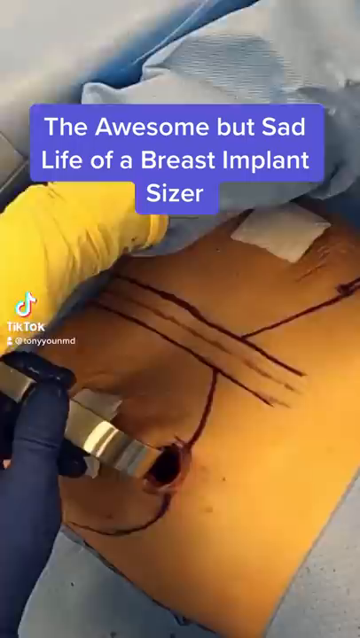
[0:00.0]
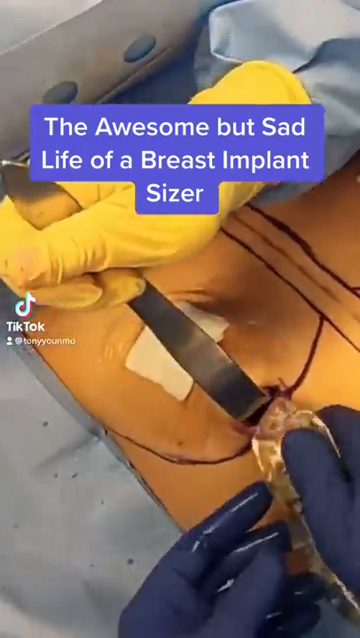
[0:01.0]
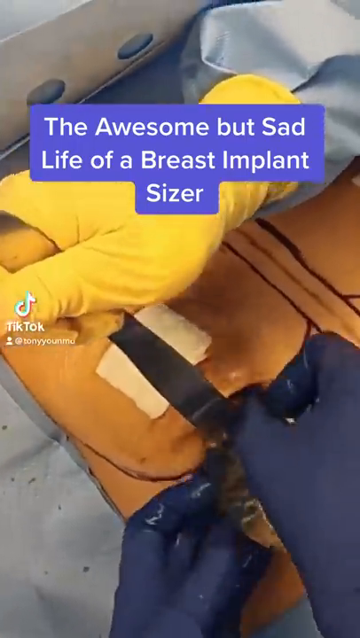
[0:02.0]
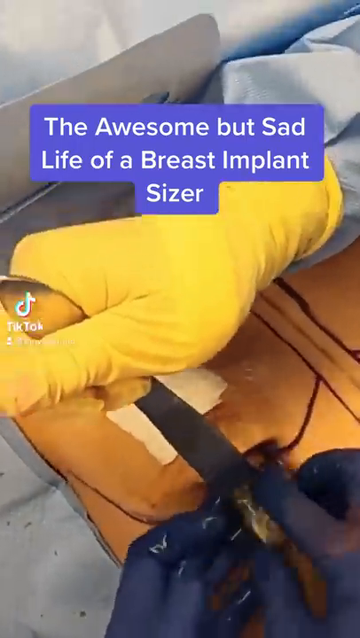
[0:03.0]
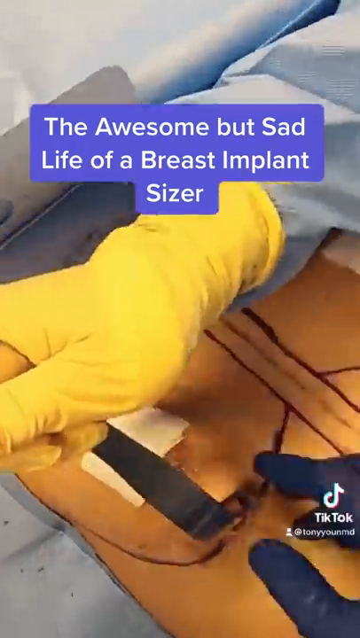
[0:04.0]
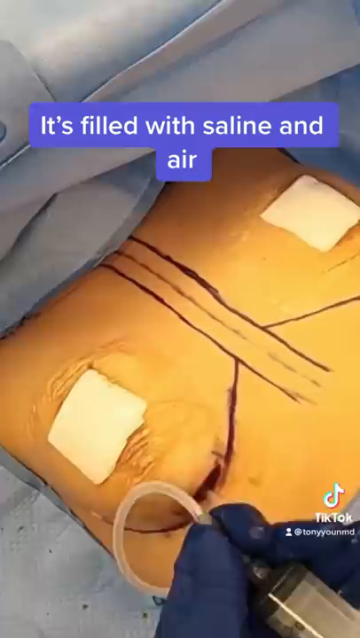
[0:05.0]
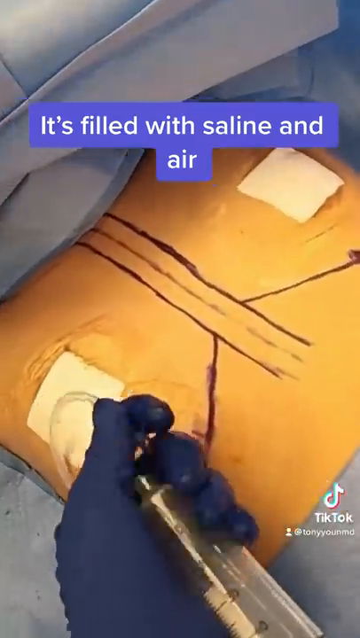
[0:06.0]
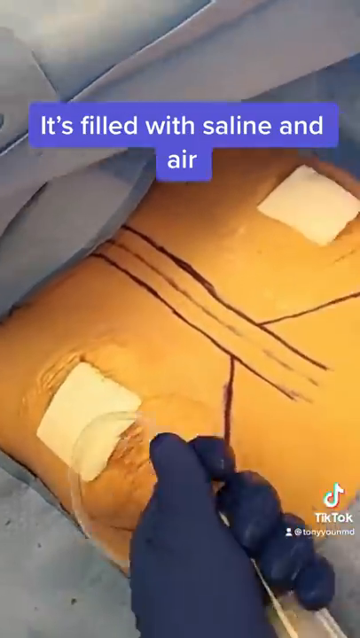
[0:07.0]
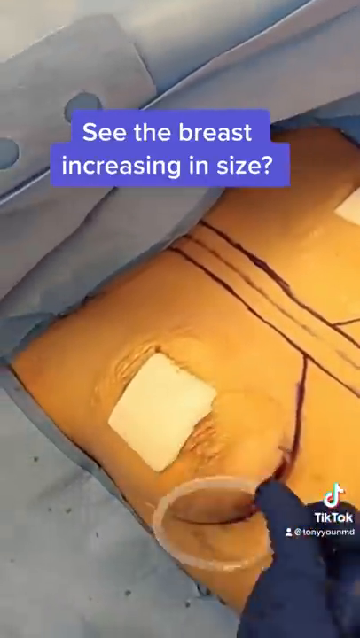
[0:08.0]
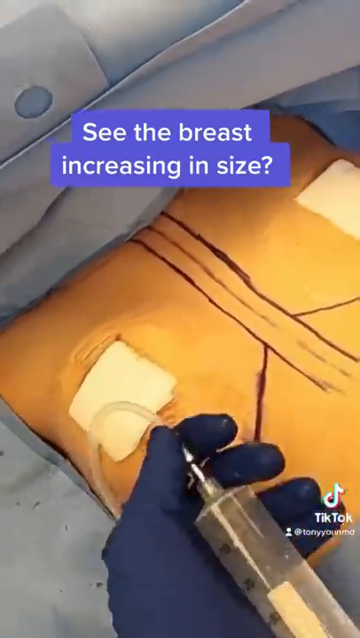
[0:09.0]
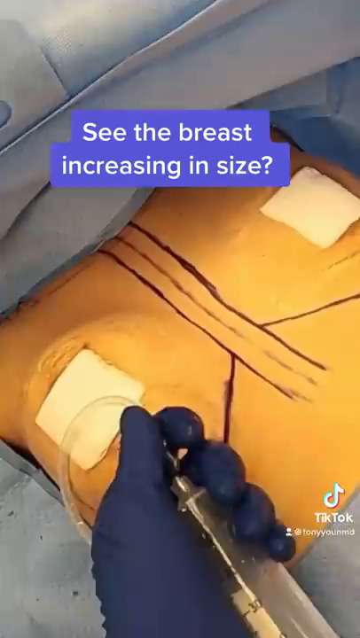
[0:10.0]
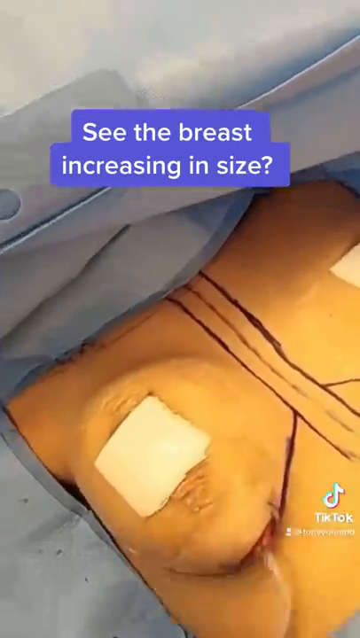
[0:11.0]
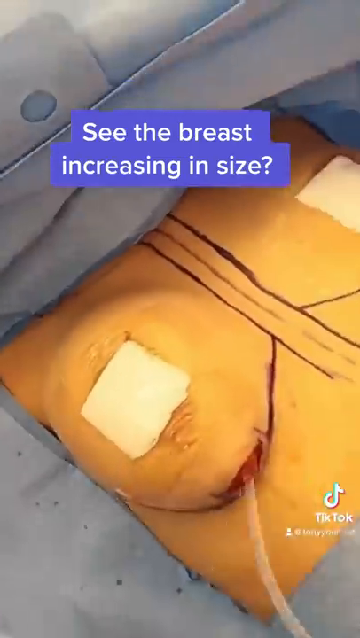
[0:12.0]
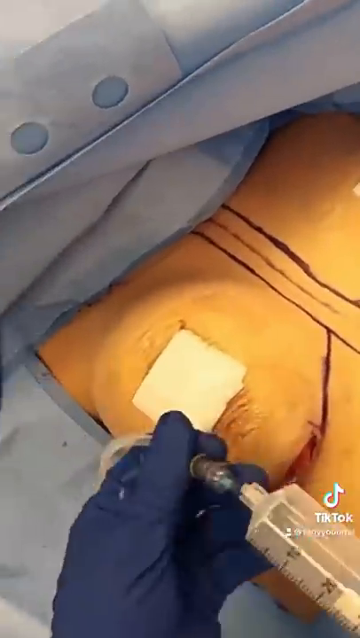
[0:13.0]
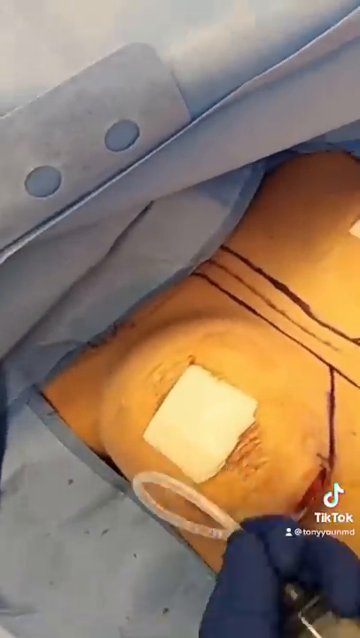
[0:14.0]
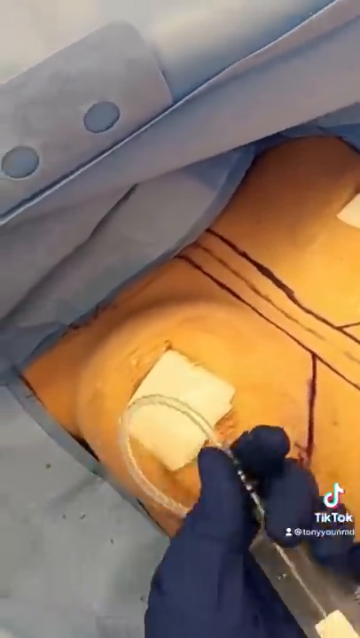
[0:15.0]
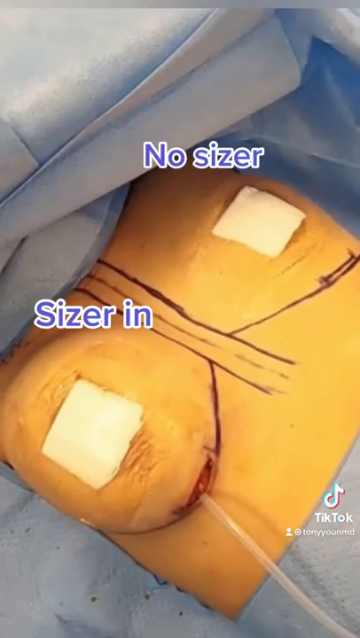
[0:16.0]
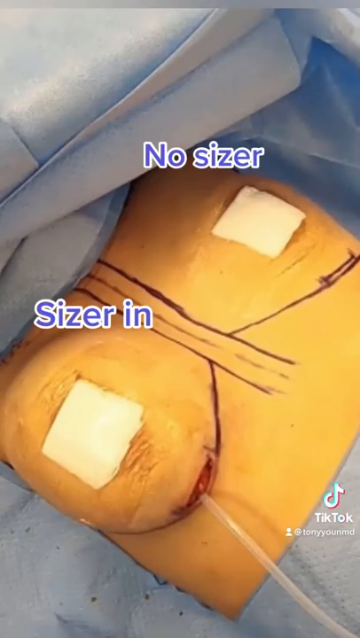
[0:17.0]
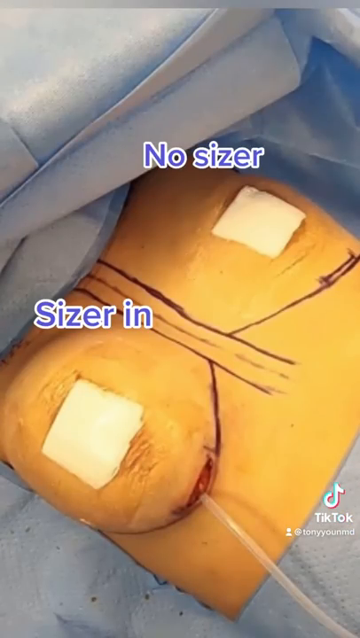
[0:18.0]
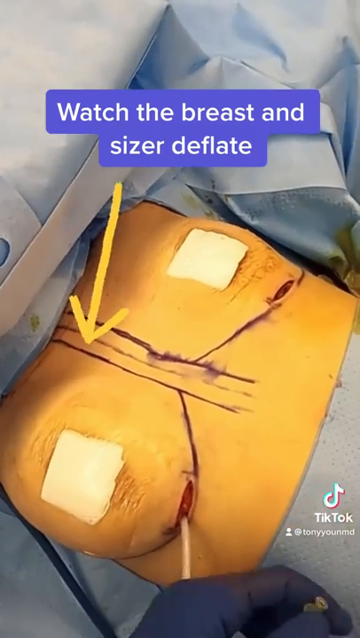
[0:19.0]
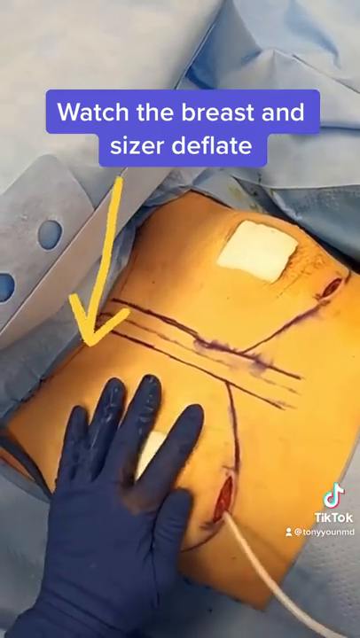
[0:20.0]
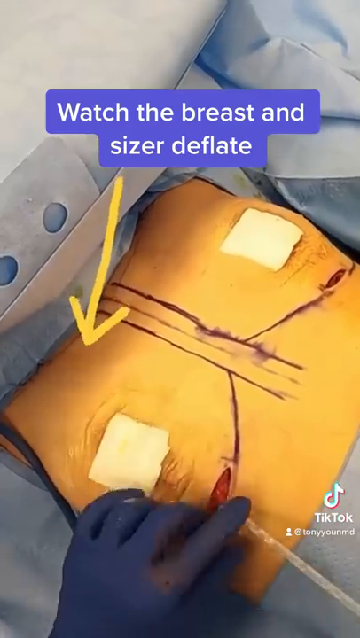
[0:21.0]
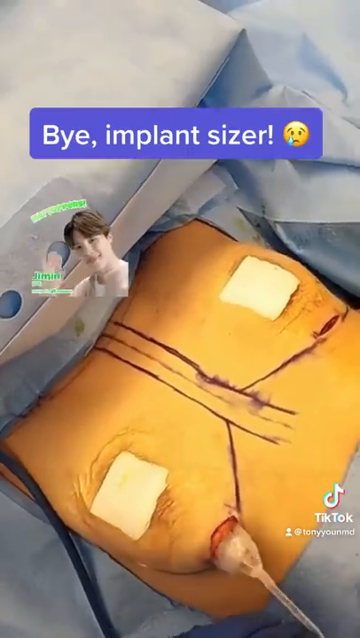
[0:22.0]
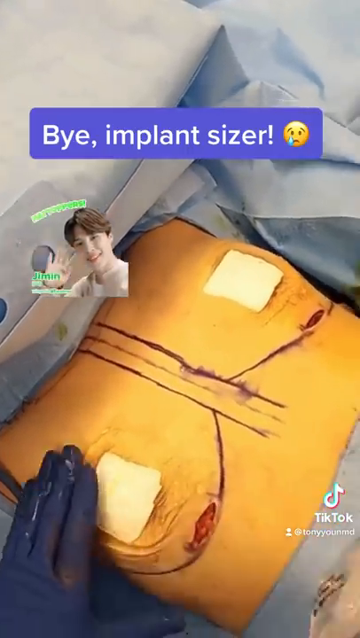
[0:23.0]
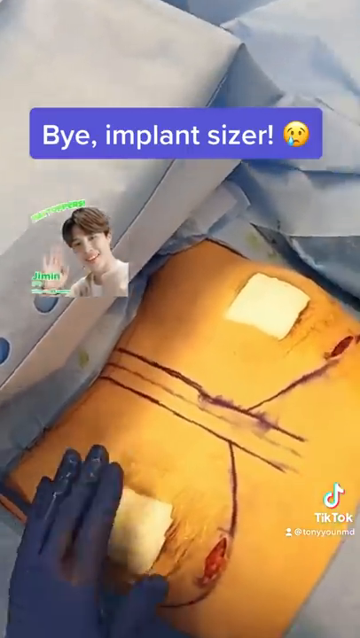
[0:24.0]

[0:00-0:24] The video, titled The Awesome but Sad Life of a Breast, shows an individual with their shirt off in an operating room while a surgeon works directly with the patient. The video shows one woman's breast being inflated in comparison to the other breast. Text on screen reads "The awesome but sad life of a breast implant sizer." The surgeon uses a pump to inflate the breast size on the patient's right breast, and it grows larger as the video goes on. The video then compares the sizer the surgeon just worked on with the left breast, which has not been worked on yet. At the end, text appears that begins "watch the breast," and as the pump is removed from the breast, it deflates instantly.